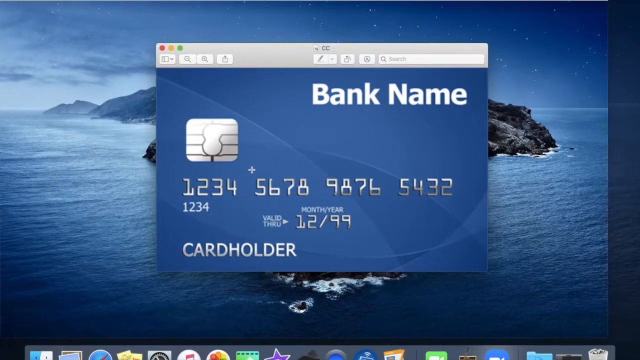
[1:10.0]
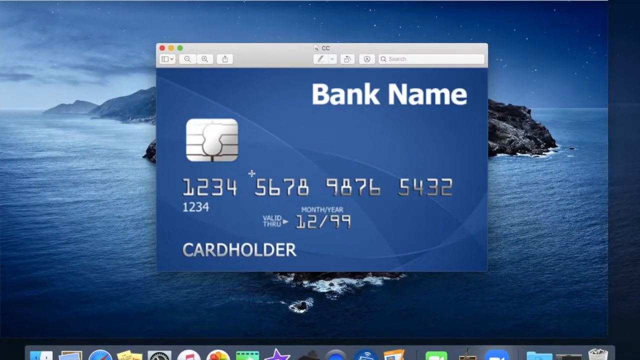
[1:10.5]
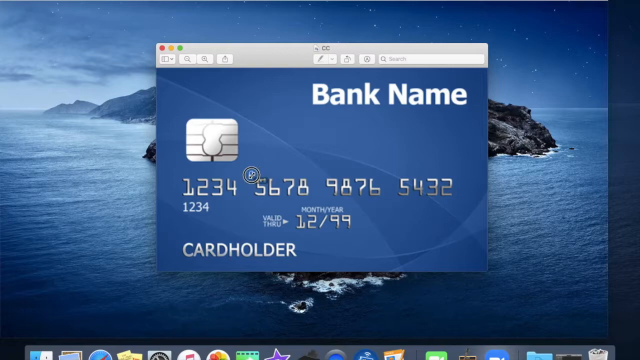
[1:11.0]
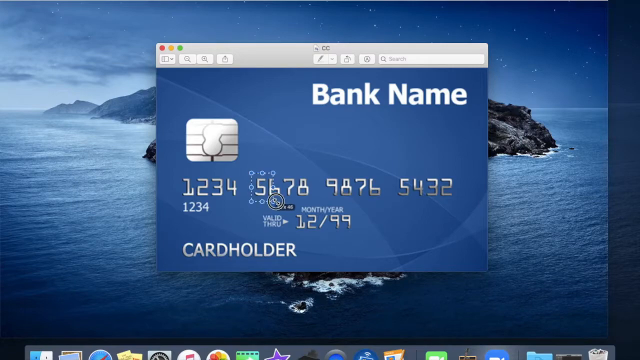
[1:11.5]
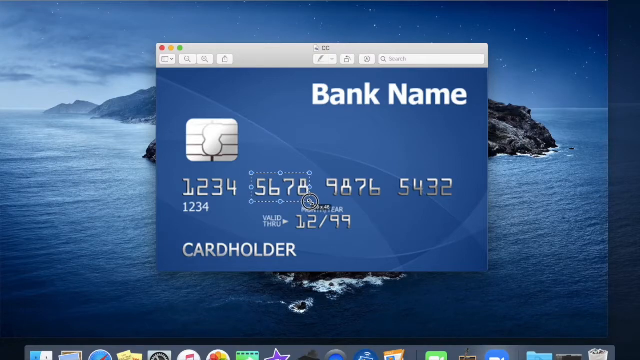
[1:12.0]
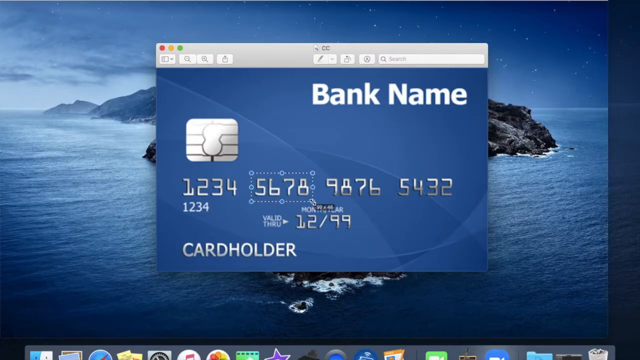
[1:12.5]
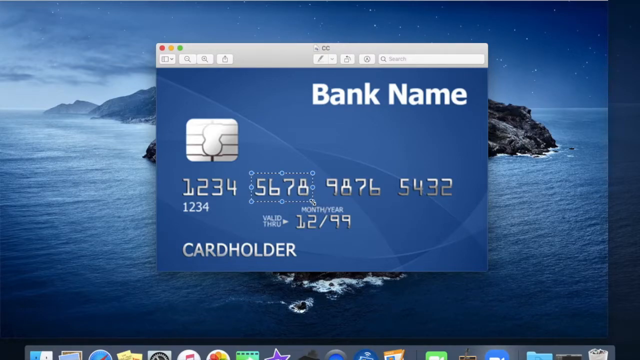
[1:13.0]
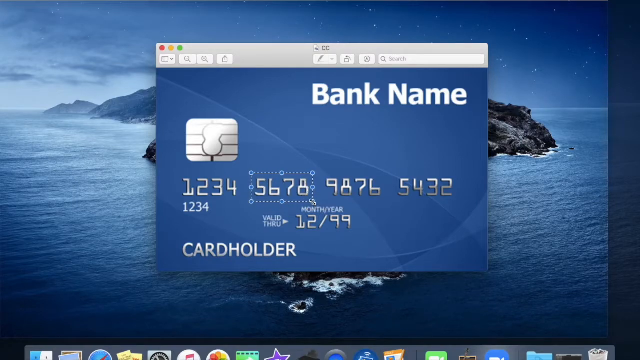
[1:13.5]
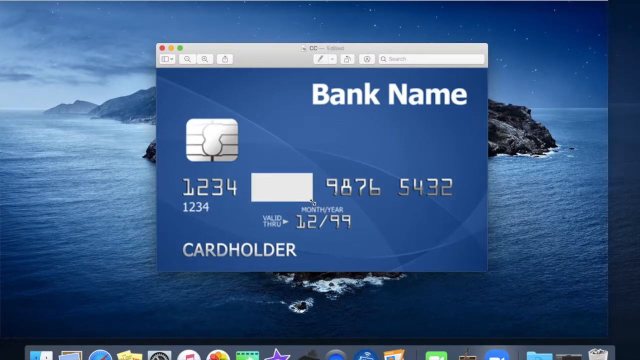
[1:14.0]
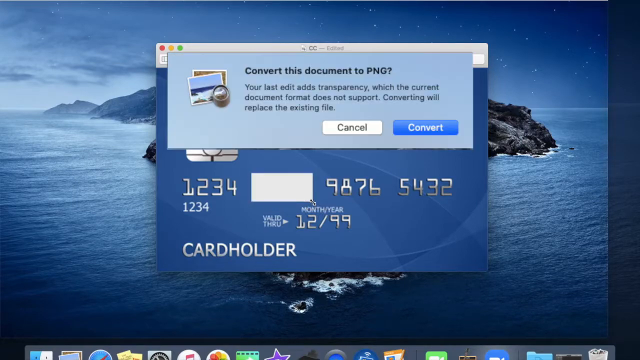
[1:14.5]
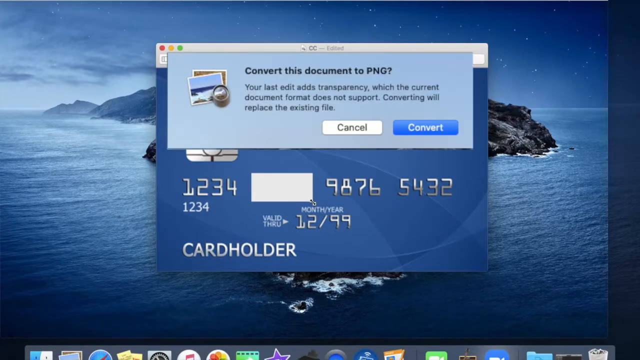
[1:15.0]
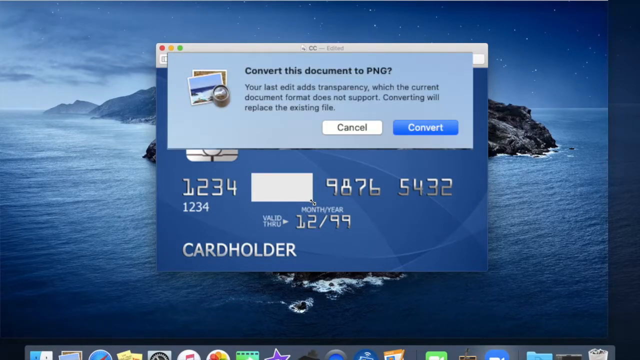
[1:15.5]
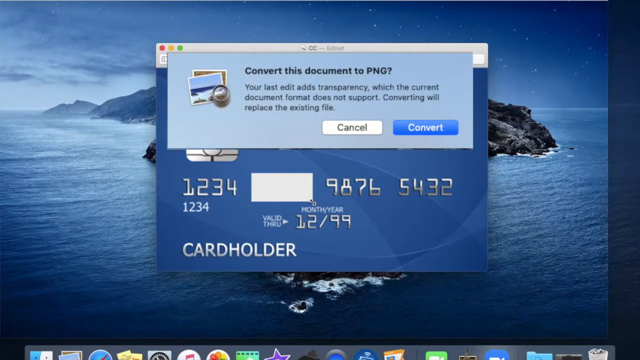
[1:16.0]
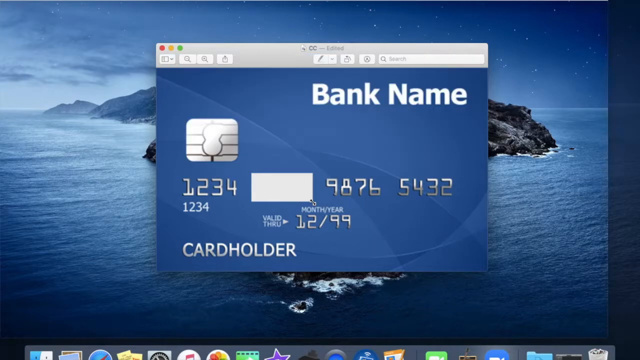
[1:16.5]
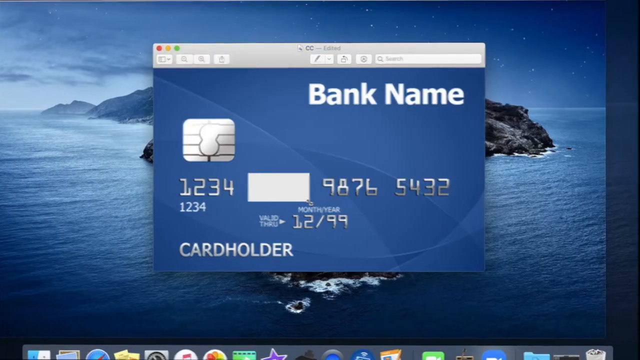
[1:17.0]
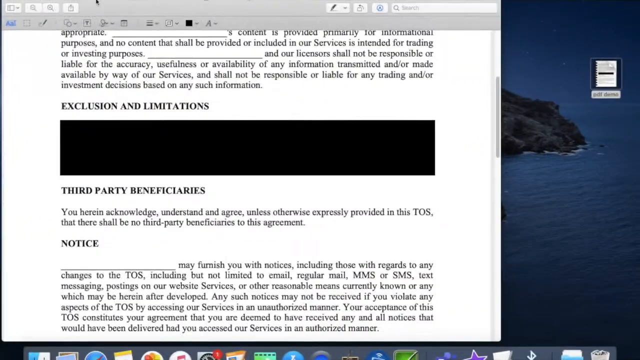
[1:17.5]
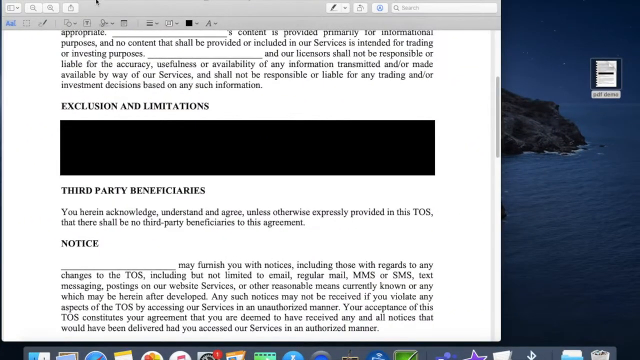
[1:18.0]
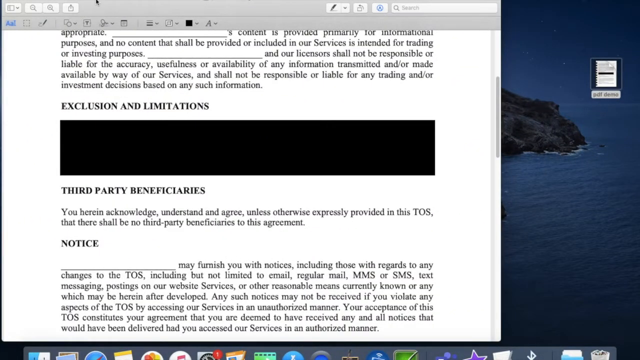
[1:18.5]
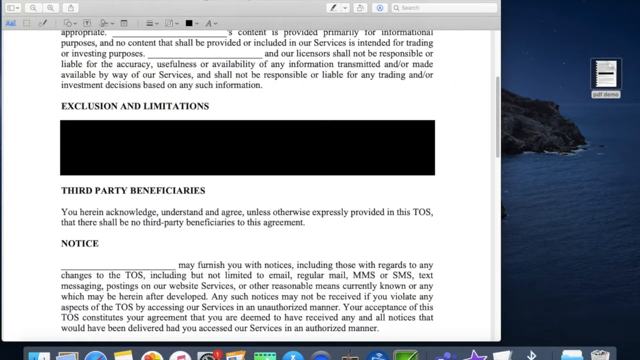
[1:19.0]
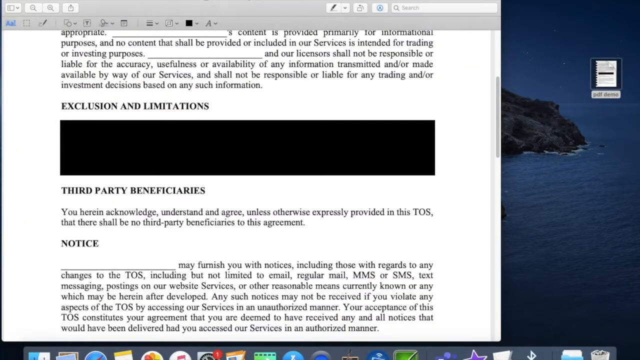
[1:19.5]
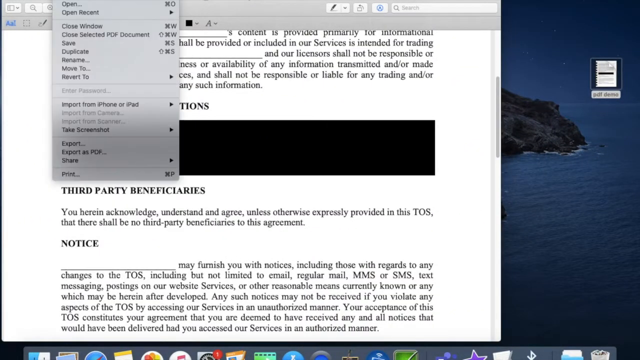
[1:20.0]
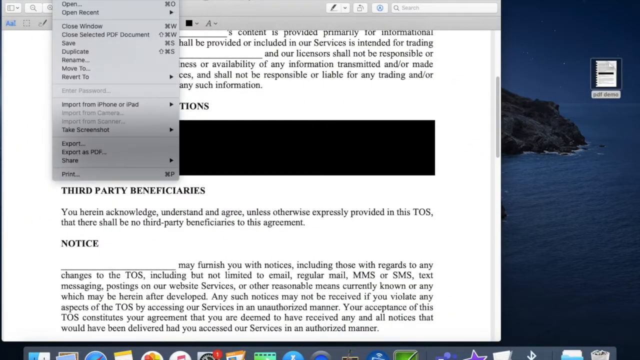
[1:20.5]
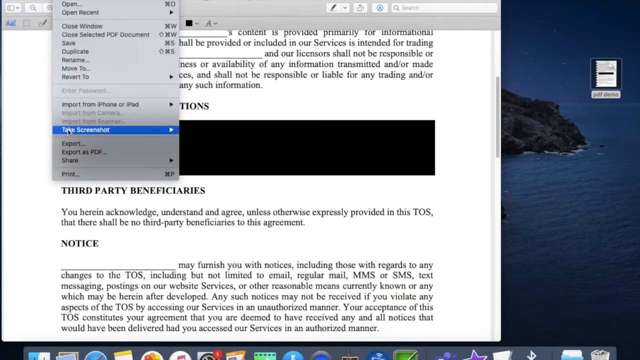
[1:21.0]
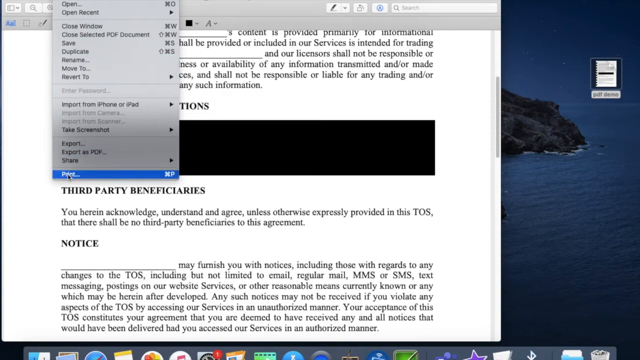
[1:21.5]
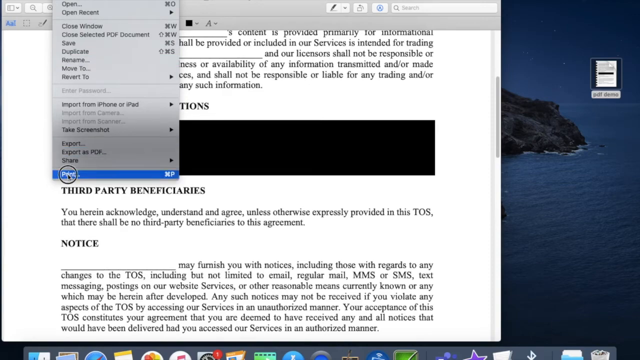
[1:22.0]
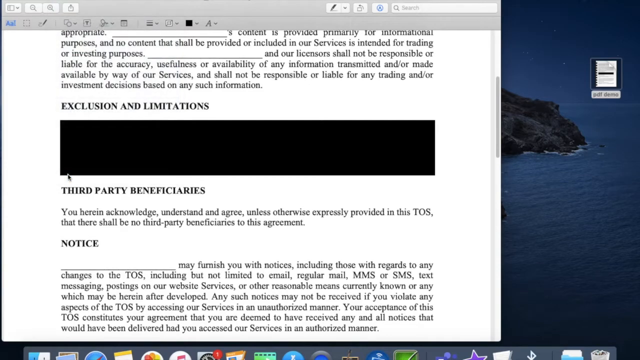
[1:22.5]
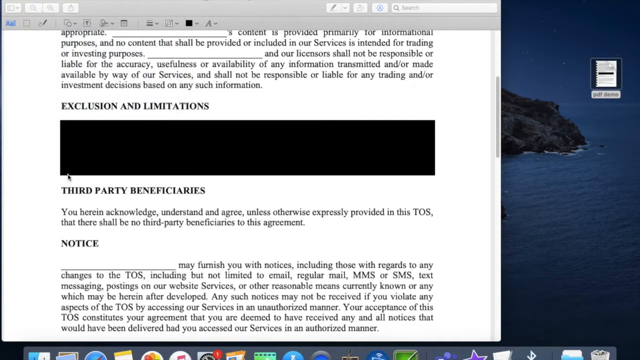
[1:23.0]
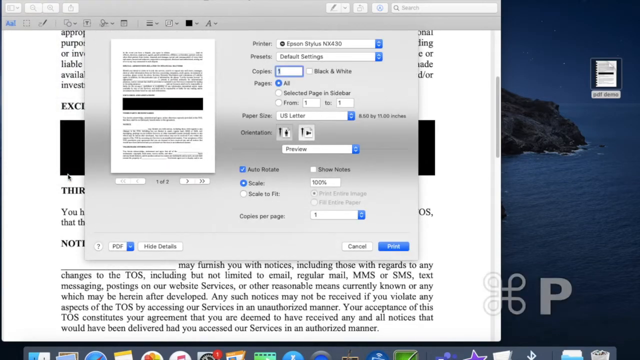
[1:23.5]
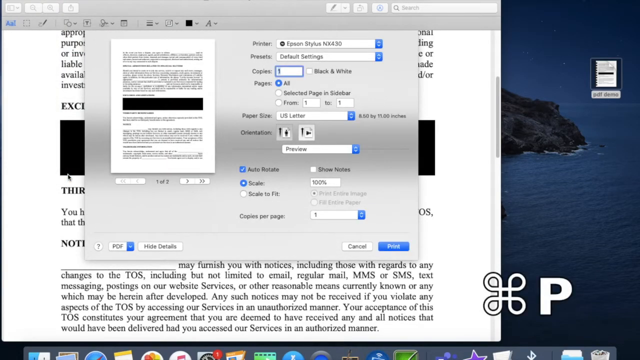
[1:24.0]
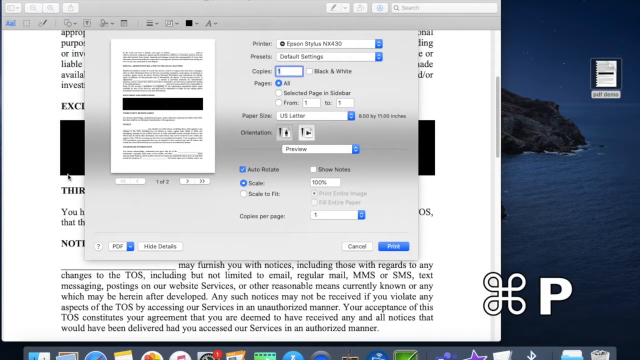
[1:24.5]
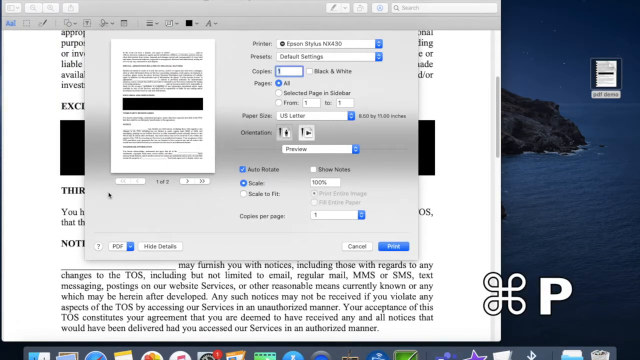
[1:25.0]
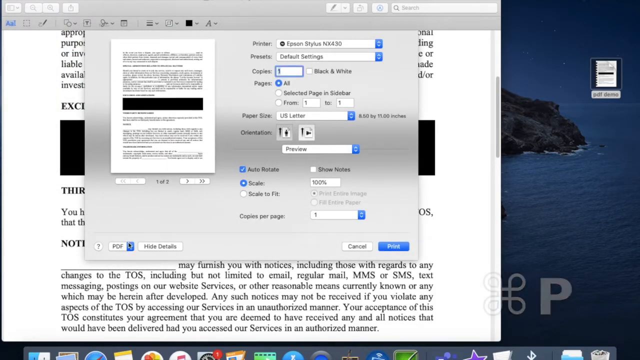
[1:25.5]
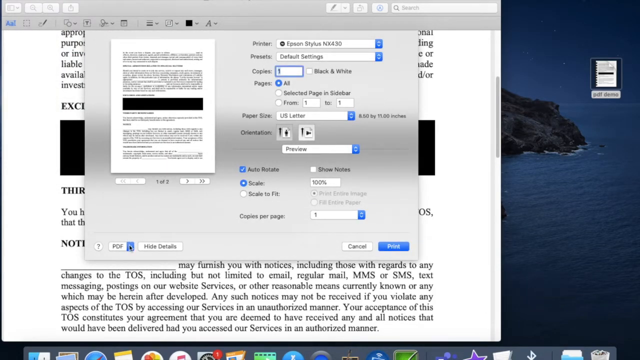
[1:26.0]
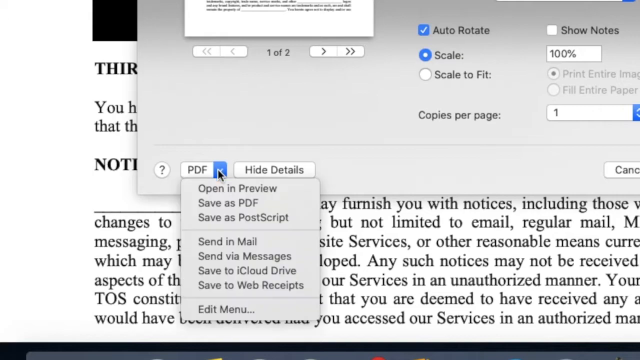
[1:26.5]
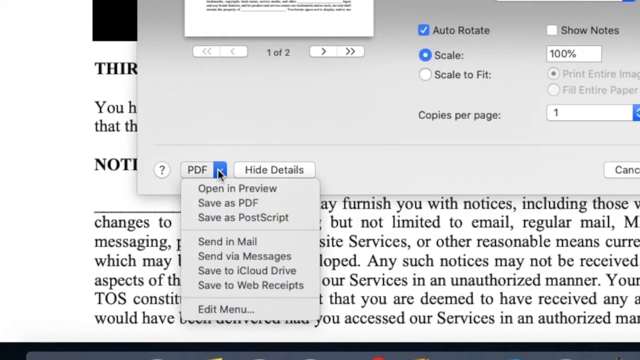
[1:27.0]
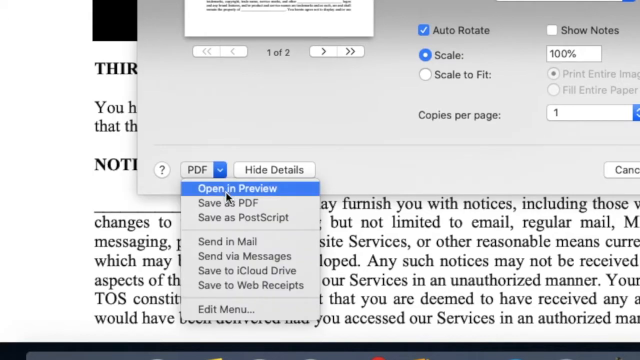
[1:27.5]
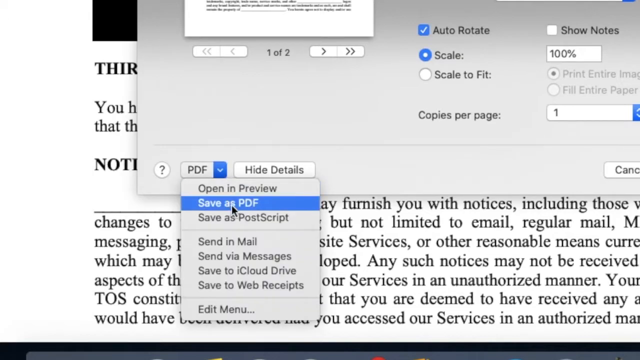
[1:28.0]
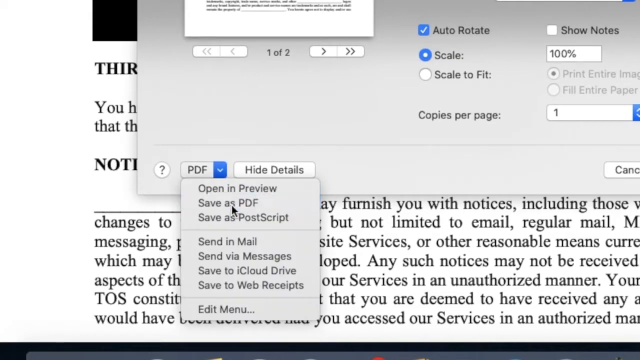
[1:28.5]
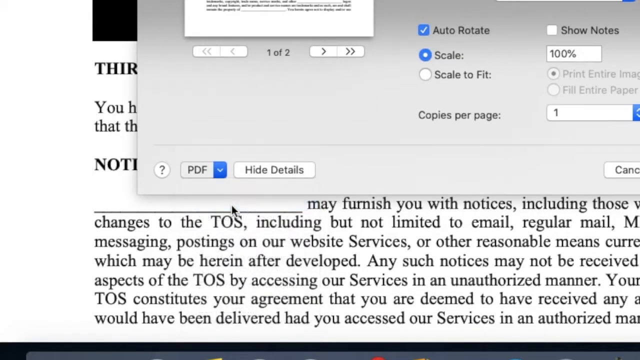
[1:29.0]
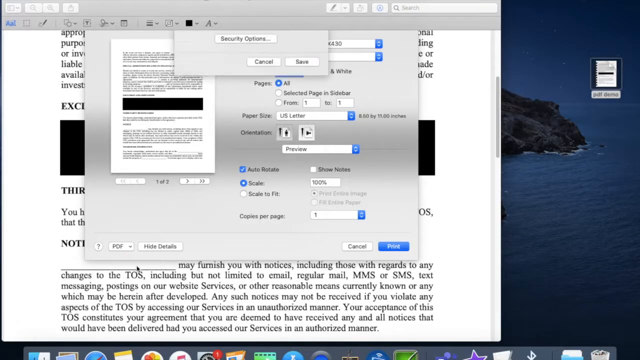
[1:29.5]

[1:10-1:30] A laptop or computer screen shows a Windows application with a picture of the front of a light blue credit card: a space for the bank name, a chip, the long card number, the expiry date and, underneath, a space for the cardholder's name. A cursor highlights a small section of the card number, covering it with a text box, and a box appears asking "convert this document to PNG" with the options "cancel" or "convert". The screen then changes to a PDF document with a large amount of white writing, a title reading "exclusion and limitations" and a large black box underneath. The cursor moves around the screen, selecting different parts, and clicks the print button, bringing up a print screen with different printer settings. The PDF button is pressed and the option "save to PDF" is chosen.